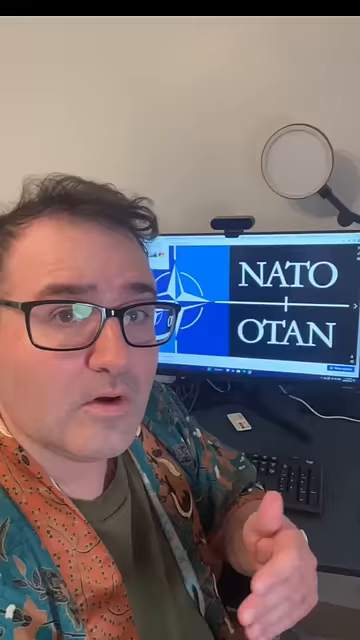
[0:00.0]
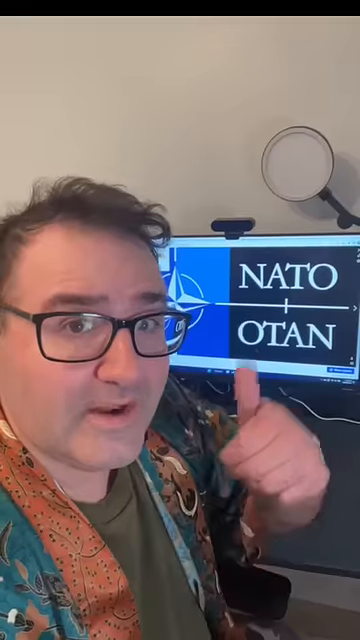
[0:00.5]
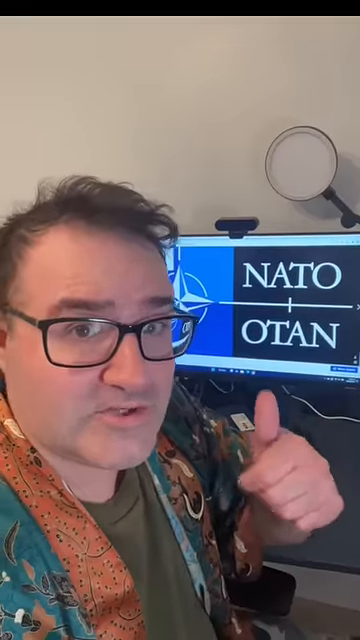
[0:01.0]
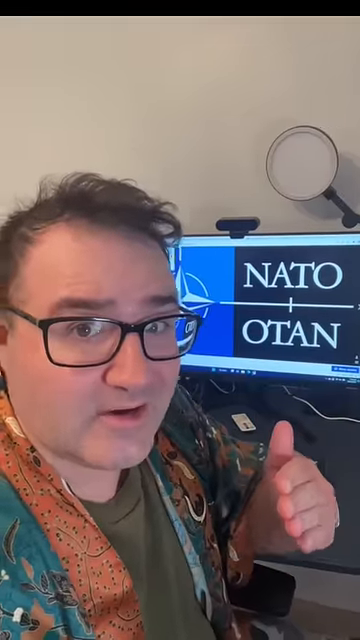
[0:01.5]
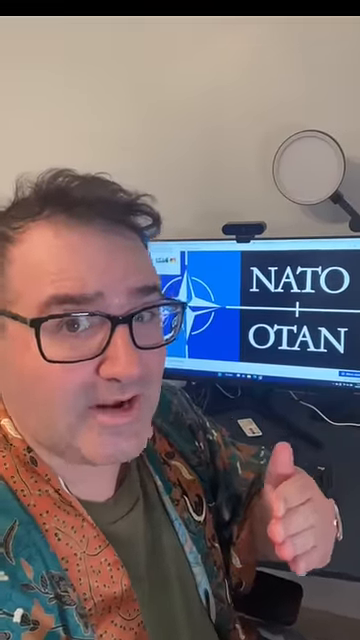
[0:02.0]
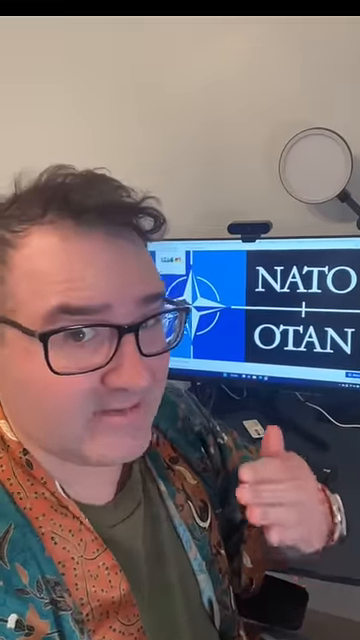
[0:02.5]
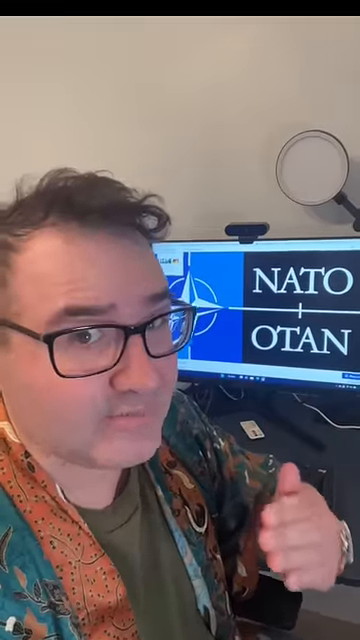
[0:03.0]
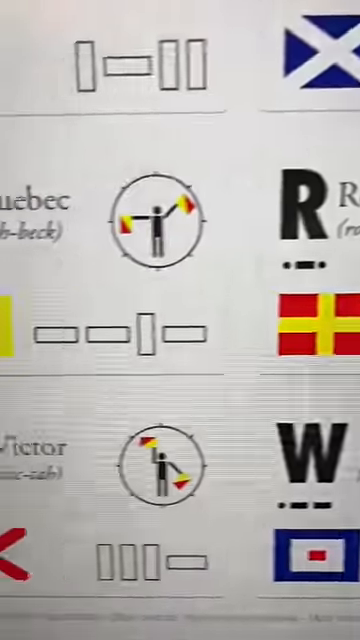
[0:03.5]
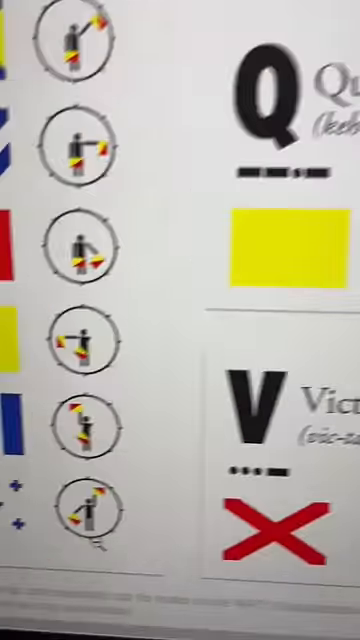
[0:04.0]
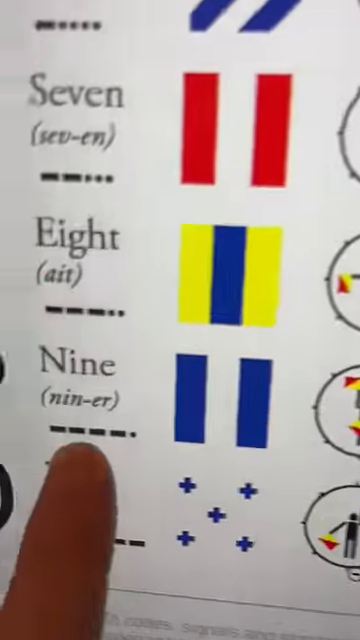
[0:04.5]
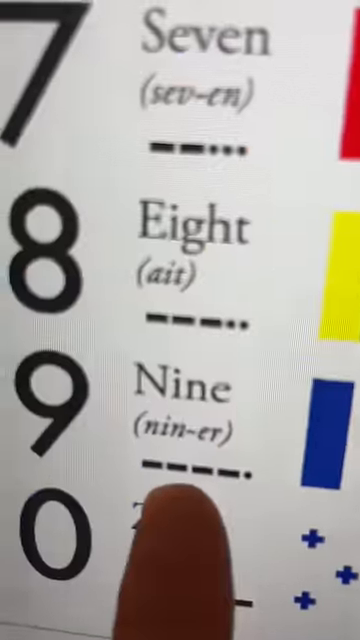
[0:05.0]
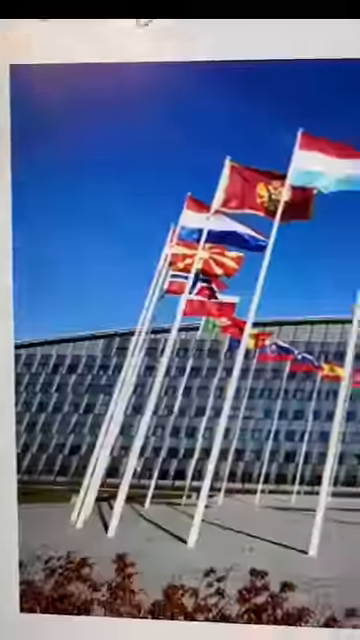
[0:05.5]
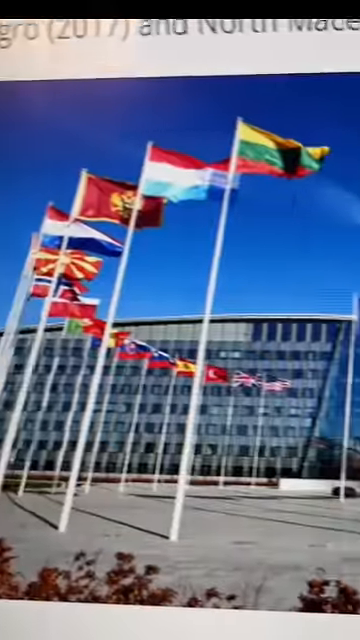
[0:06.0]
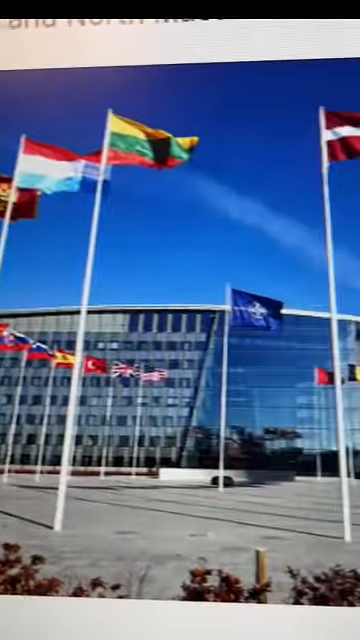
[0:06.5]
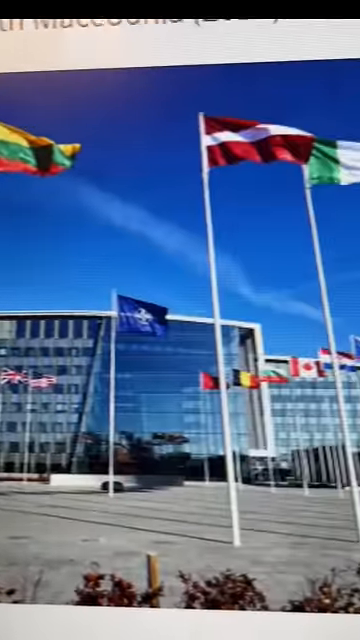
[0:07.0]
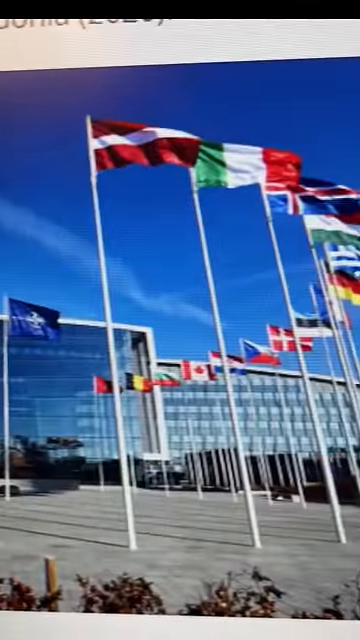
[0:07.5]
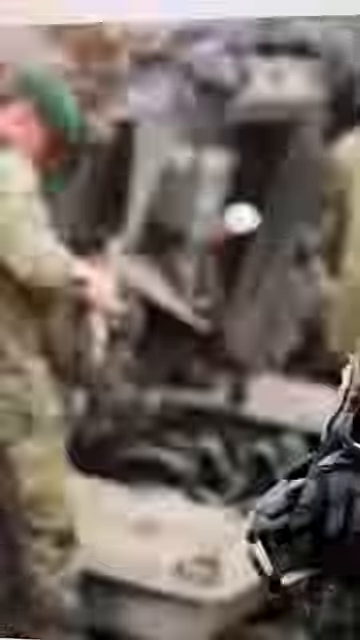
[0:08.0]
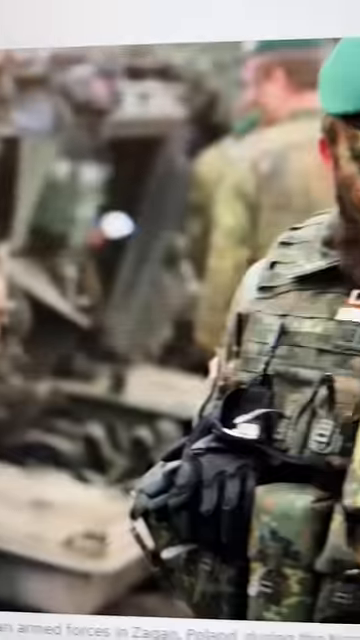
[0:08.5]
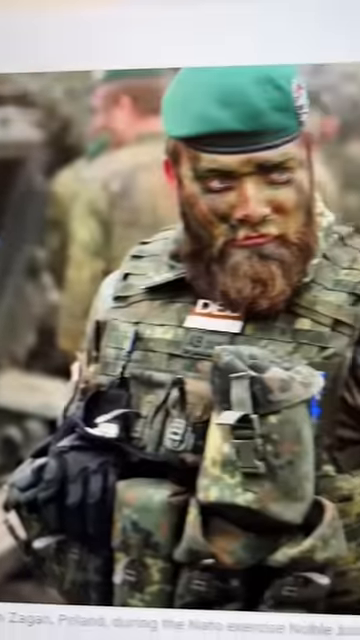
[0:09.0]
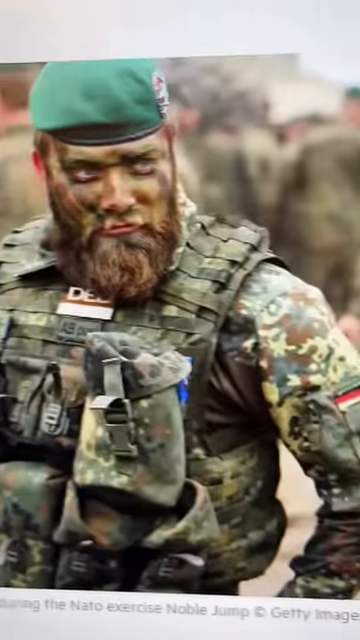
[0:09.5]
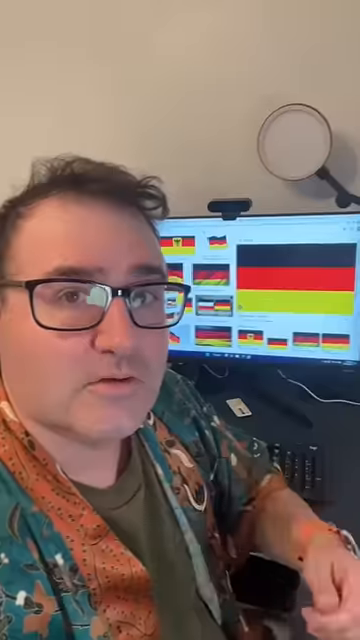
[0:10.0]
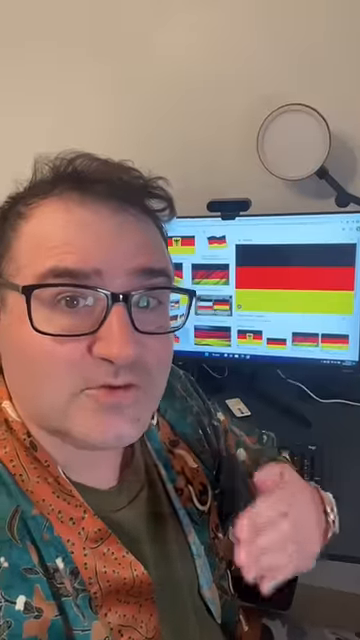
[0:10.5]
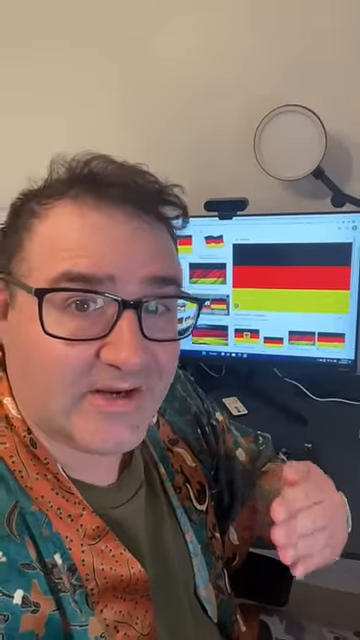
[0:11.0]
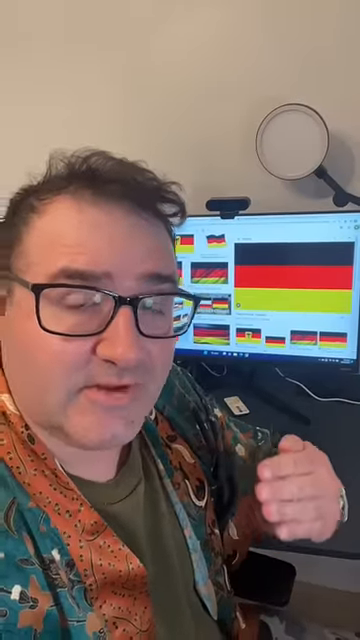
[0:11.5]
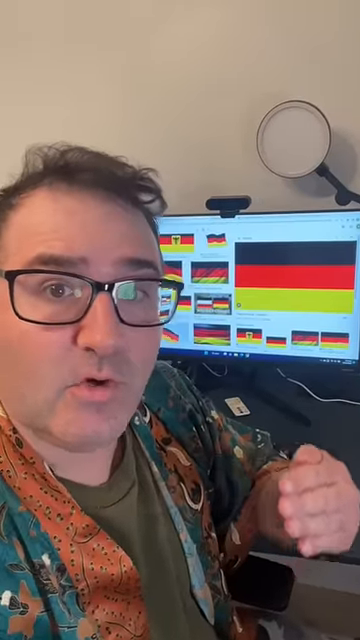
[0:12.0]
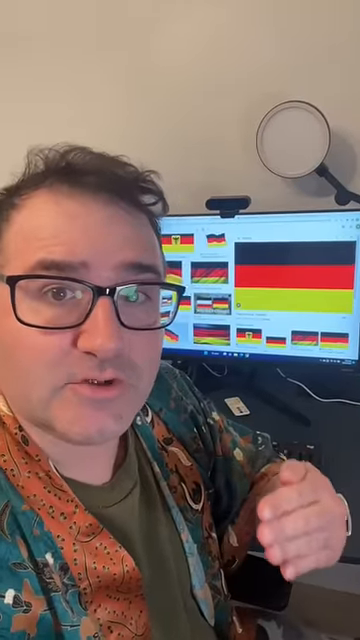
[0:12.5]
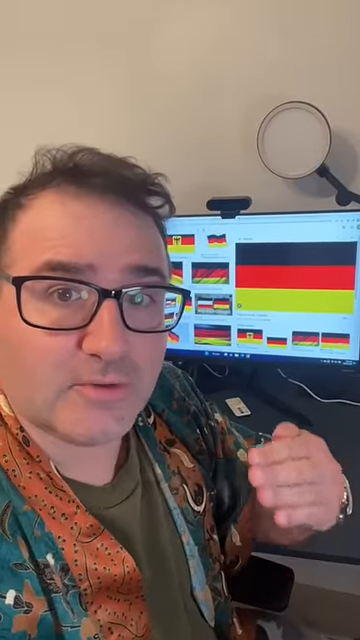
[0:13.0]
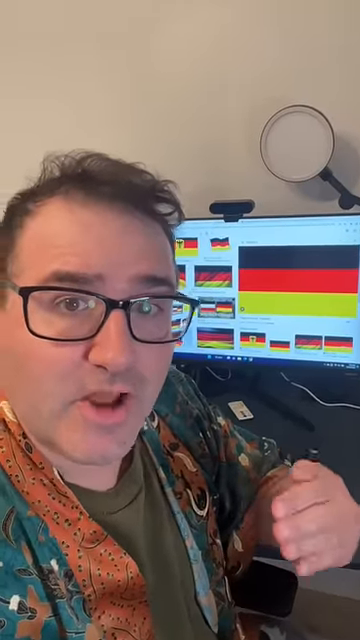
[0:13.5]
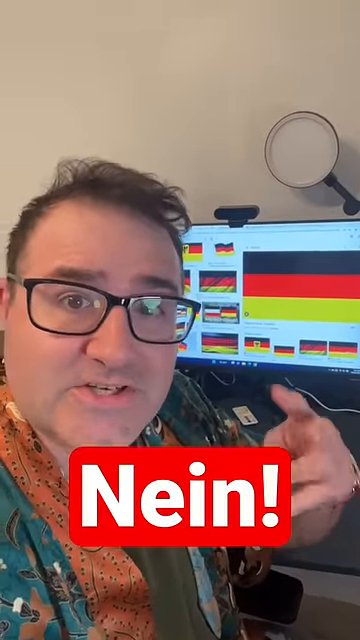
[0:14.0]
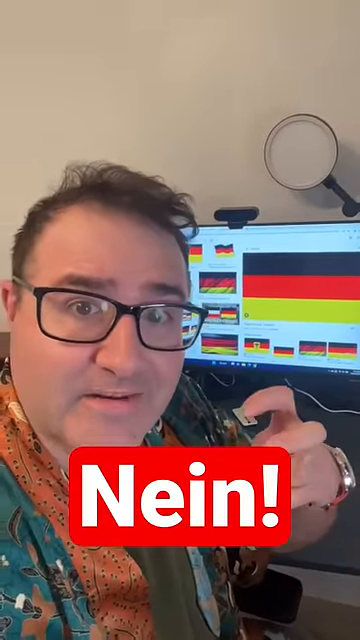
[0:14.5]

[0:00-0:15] A man's profile picture appears in the left corner: he is Caucasian, looks like he might be overweight, and wears a blue sport coat, a white shirt and glasses, with short hair. Next to it, white letters read "why do soldiers say niner instead of nine?" In the middle, the same man from the profile picture is talking. Here he wears an army green t-shirt with what looks like an orange or rust-colored jacket over it. His computer is on in the background, showing "NATO" with "O-C-A-N" below it. On the computer screen he shows a building with a bunch of flags in front, then different countries. The word "nine" appears, then "niner", and military men appear on the screen. Along the screen, "N-E-I-N" and "nine" appear in white letters in a red box, and then the video ends.